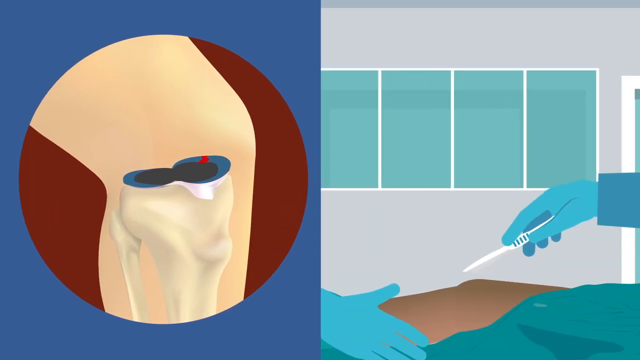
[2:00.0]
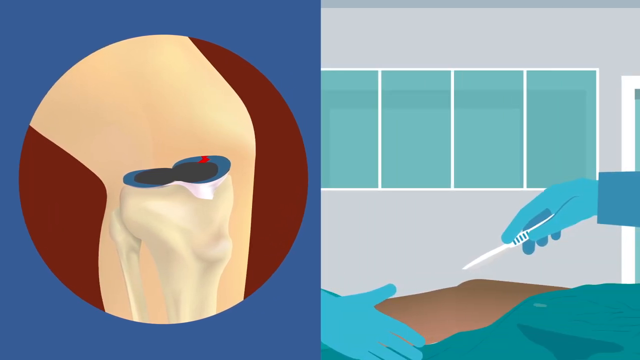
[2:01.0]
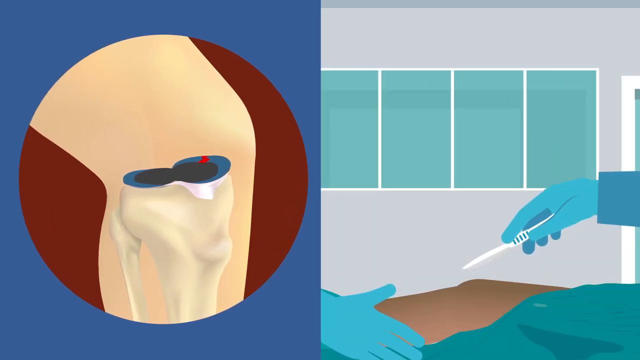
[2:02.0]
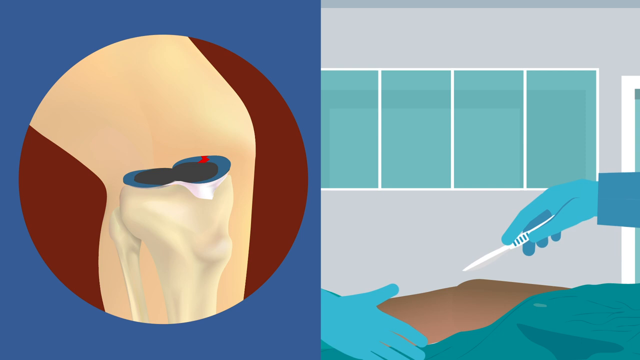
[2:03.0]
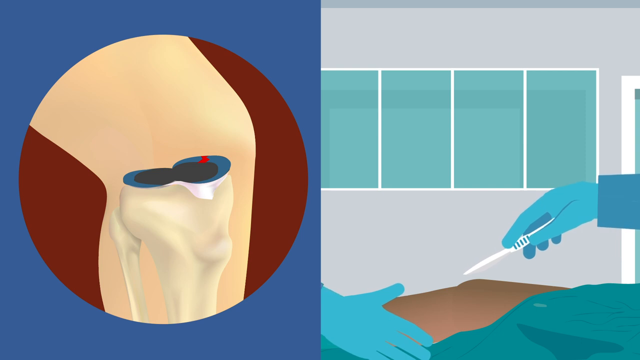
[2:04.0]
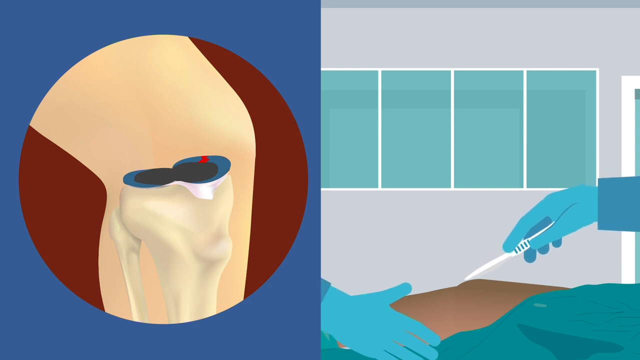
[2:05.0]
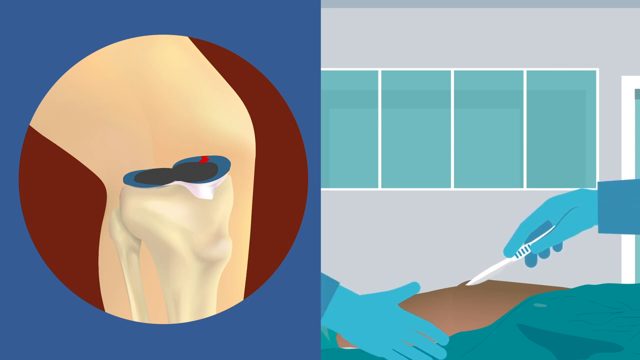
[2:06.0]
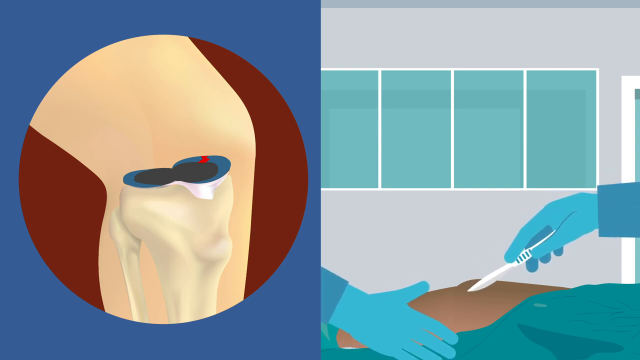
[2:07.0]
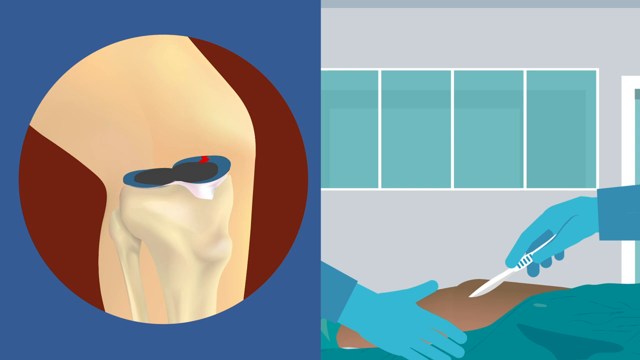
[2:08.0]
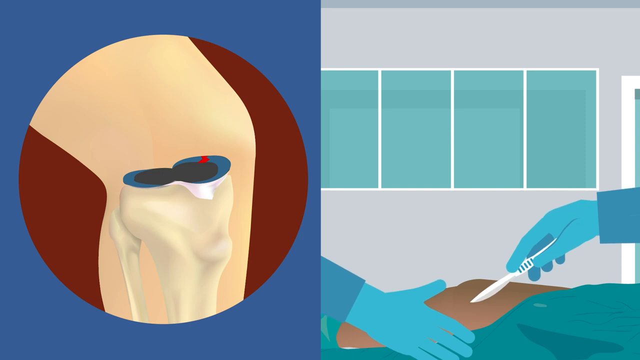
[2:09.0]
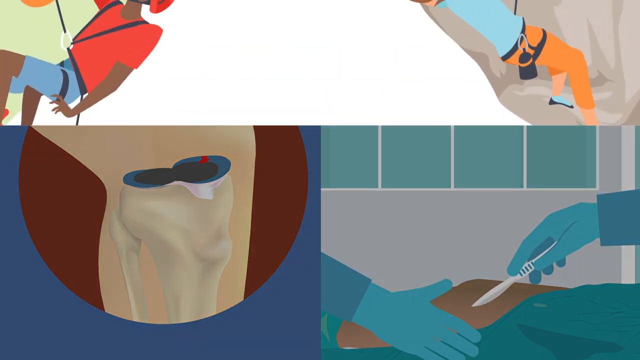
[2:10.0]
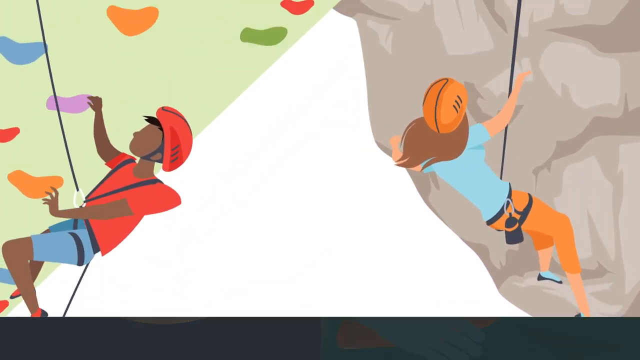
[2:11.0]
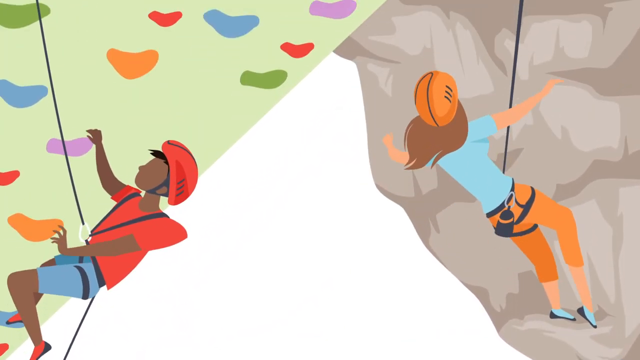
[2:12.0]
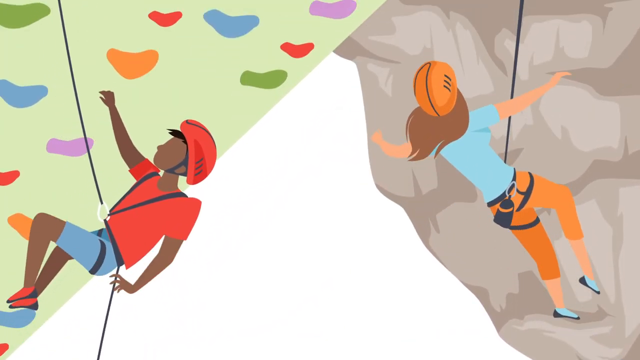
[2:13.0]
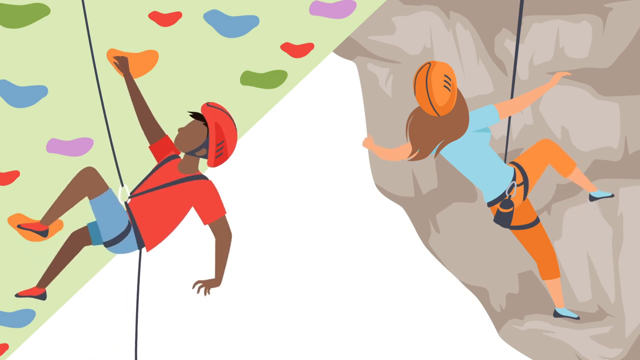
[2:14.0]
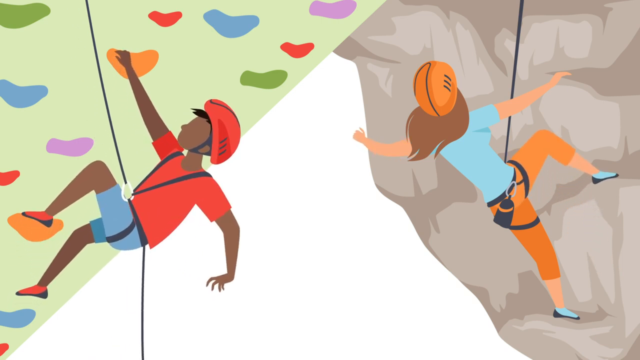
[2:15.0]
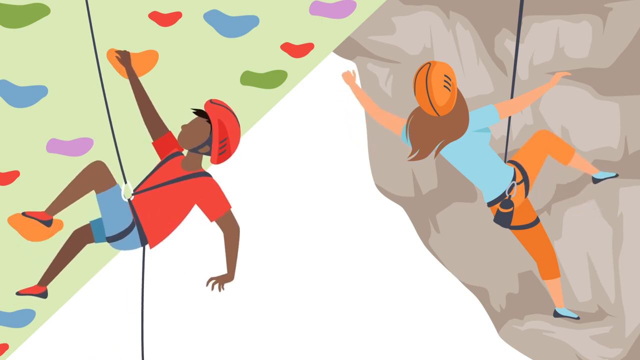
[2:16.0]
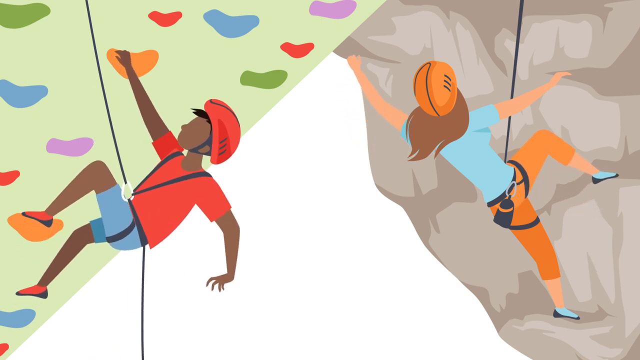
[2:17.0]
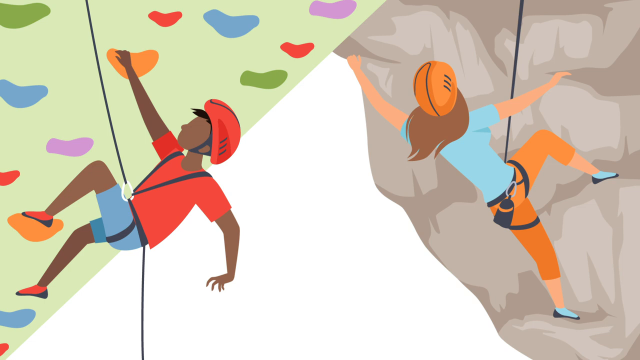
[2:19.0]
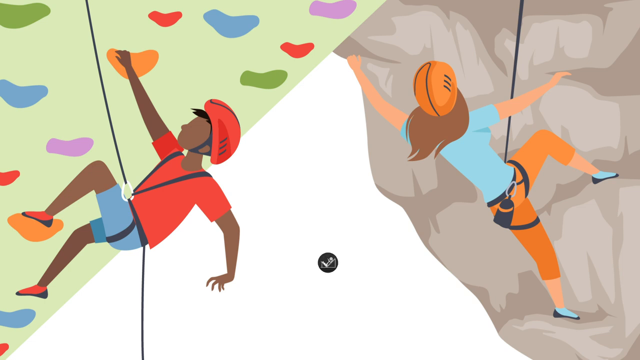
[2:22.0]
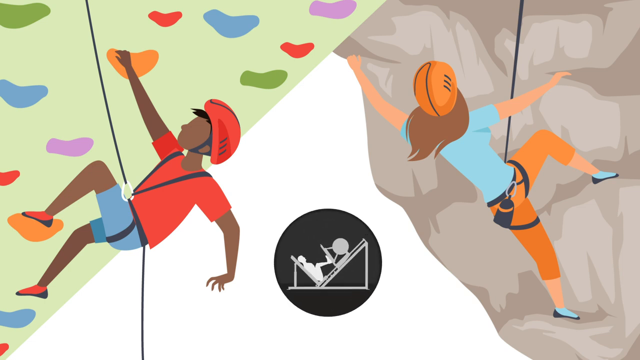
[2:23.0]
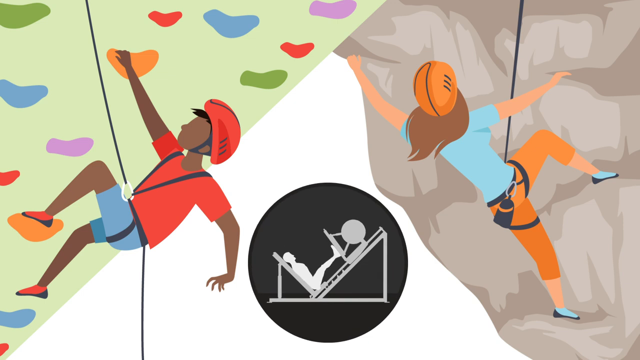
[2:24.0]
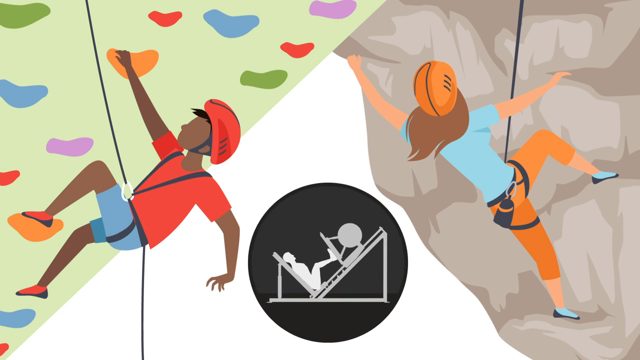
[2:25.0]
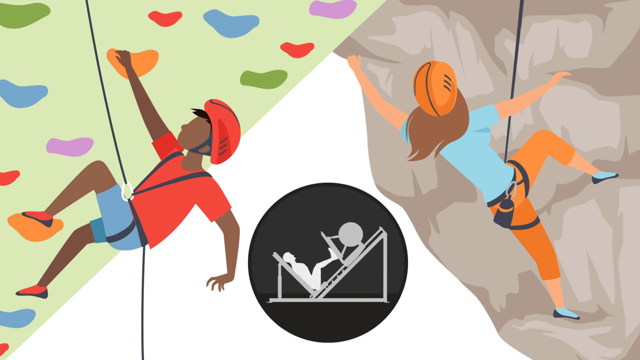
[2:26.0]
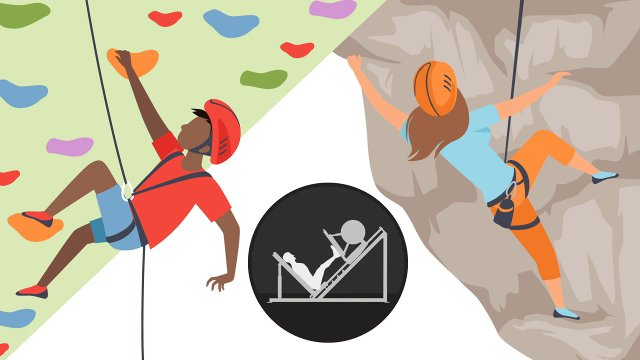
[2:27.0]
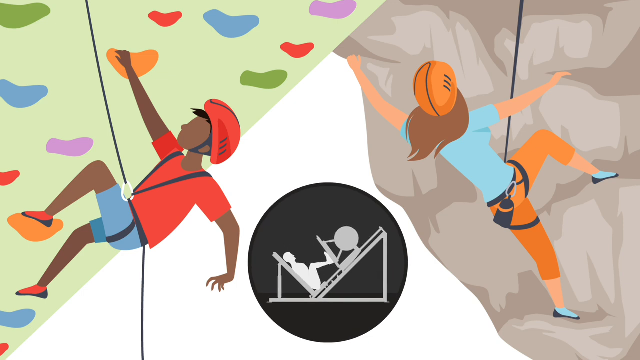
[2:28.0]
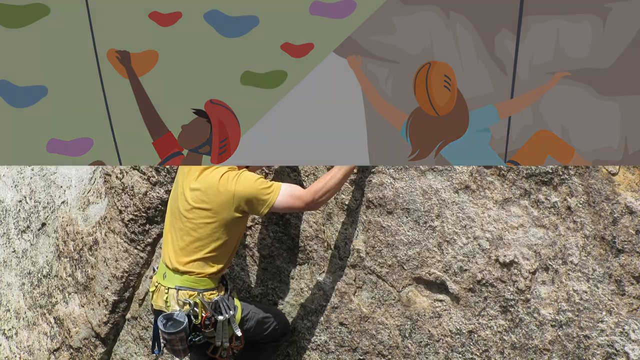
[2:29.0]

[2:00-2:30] The screen is split. On the left, against a blue background, a red circle contains an illustration of a person's knee; the knee bone looks cut off at the top and is black on top with blue around it. On the right, there is a gray wall with some blue windows. A doctor's right hand in a blue long sleeve comes in from the right side of the screen holding a scalpel, and another person's right hand in a blue glove comes in from the left side. What looks like an African person's knee is lying on a table. The hand slowly moves up and down while the hand on the left slowly moves left and right. Just as it looks like the scalpel is going to touch the skin, the image switches to two people climbing. On the left, an African-American person in a red helmet and red shirt climbs a rock wall, facing toward the top left. On the right, a woman in an orange helmet, orange pants and a blue shirt climbs a cliff, facing toward the top right.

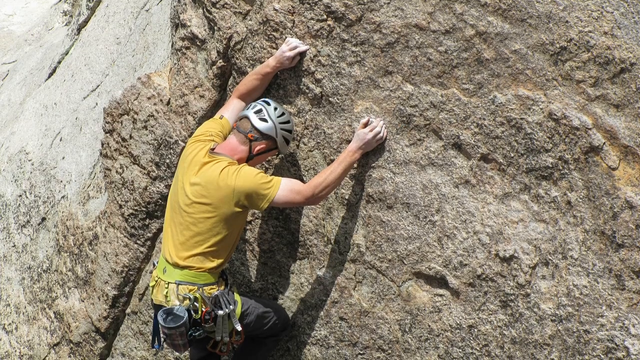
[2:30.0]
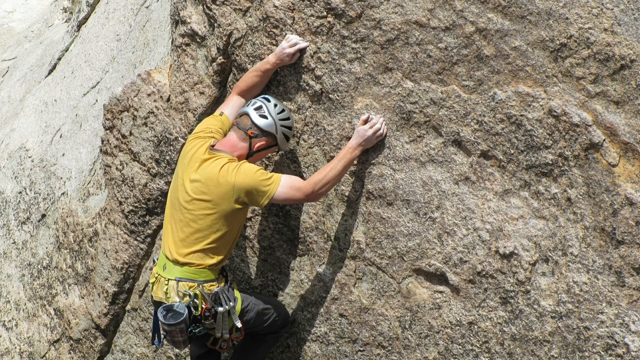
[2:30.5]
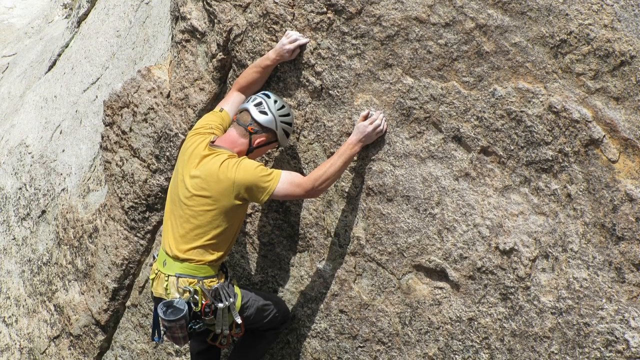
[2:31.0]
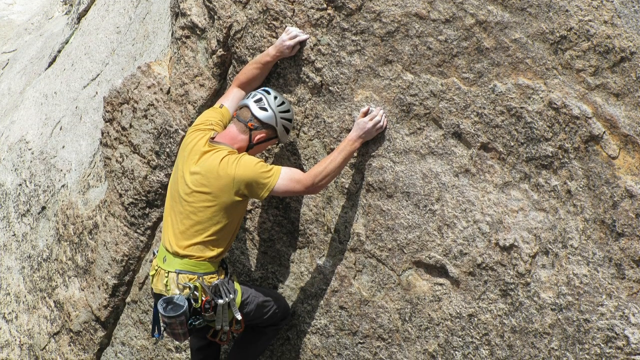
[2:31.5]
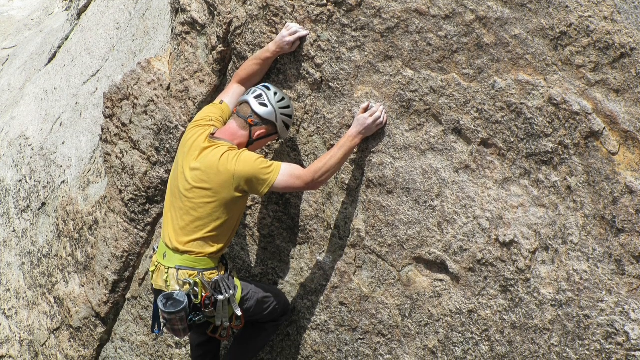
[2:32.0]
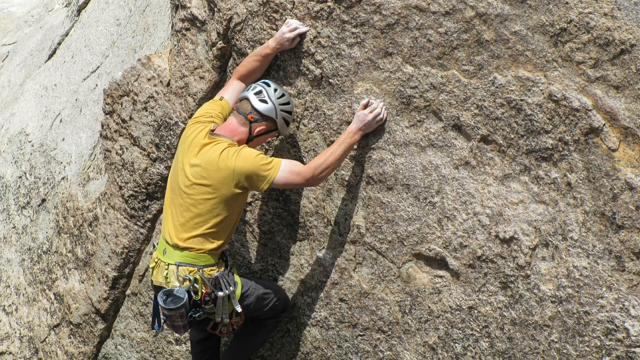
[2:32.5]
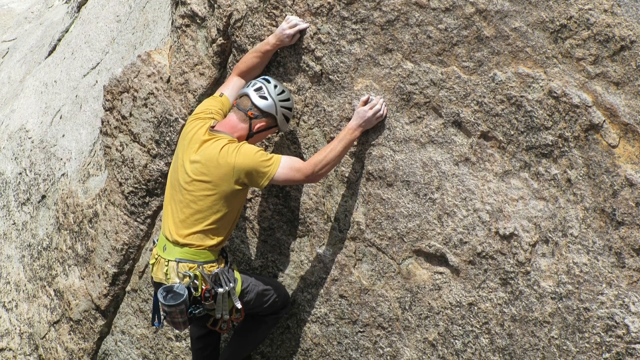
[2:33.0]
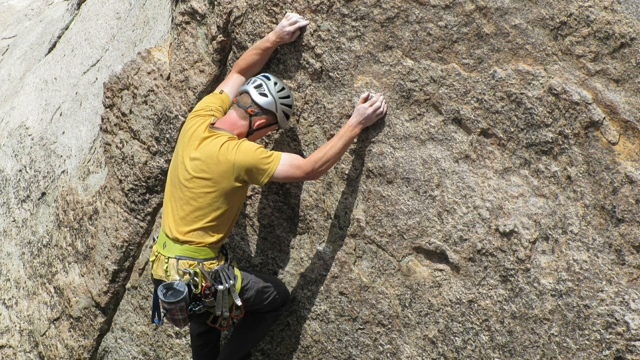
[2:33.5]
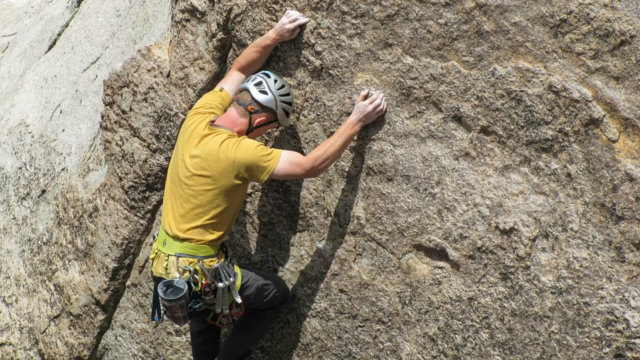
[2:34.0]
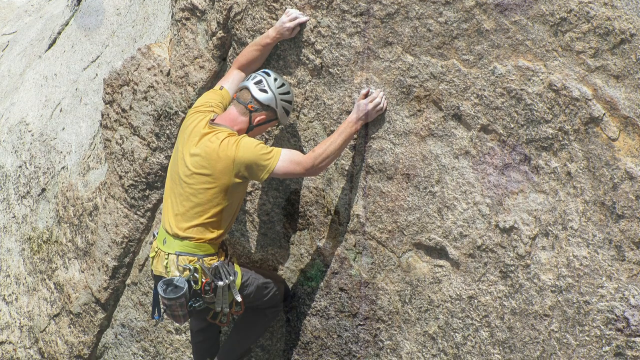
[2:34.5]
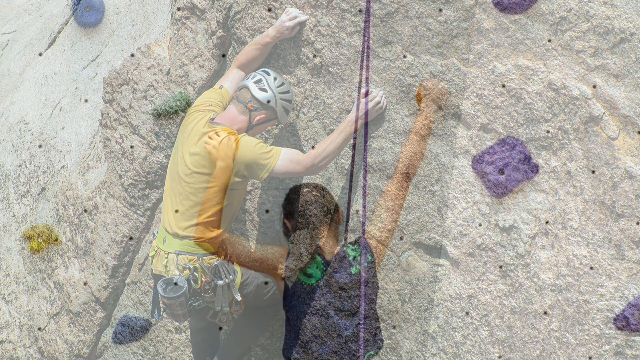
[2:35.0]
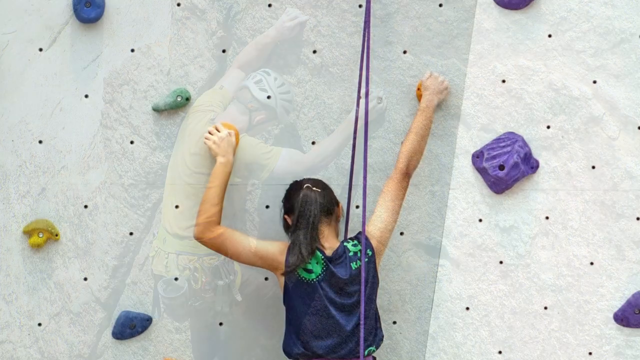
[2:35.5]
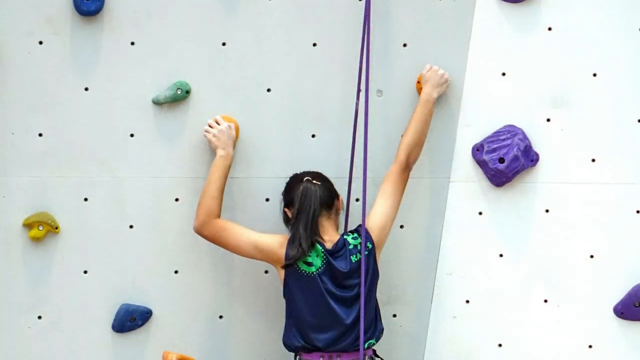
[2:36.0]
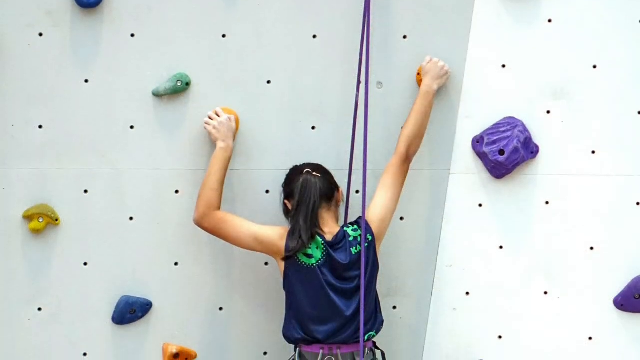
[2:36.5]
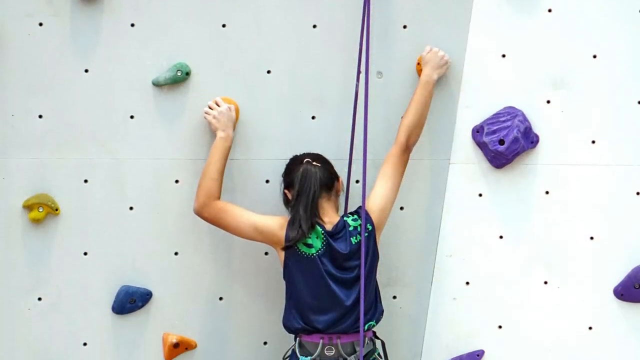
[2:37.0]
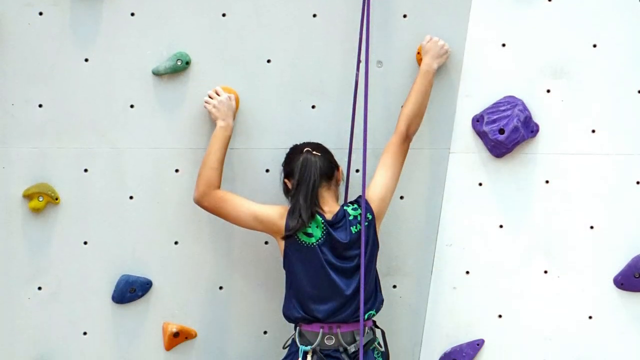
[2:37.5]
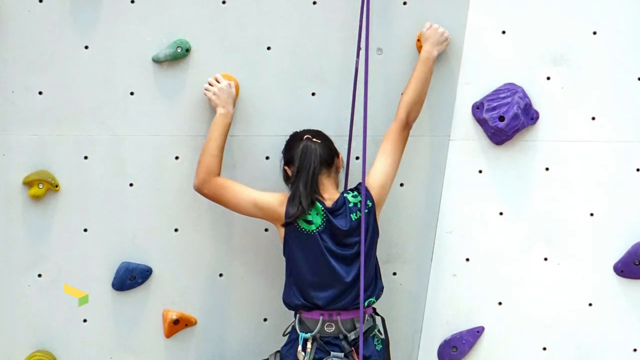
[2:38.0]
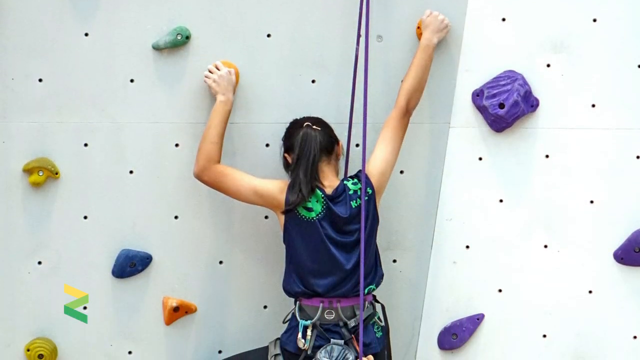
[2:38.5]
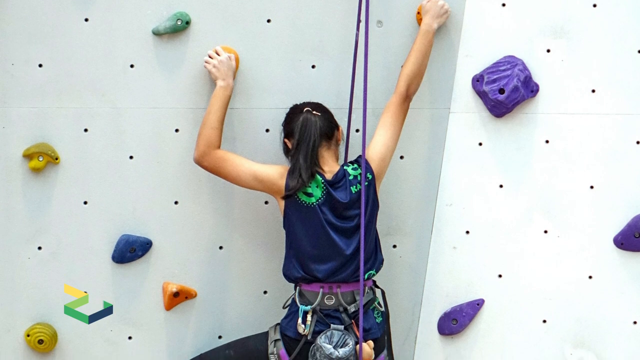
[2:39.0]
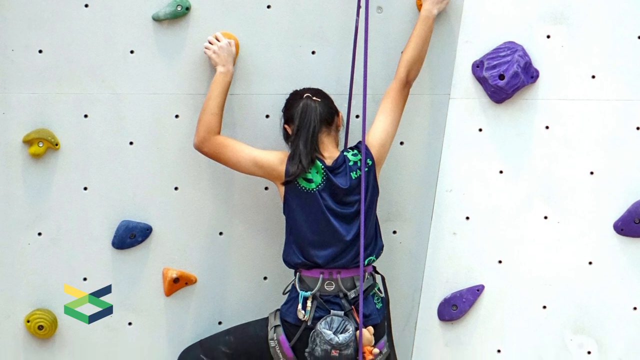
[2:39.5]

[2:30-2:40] A man climbs up a cliff face with both arms extended above his head. He is looking down, and his back is visible. He wears a gray helmet, a yellow shirt, gray pants, and a harness around his waist with various tools connected to it. The camera pans down. Then a woman is shown climbing a climbing wall like one at a sports center. Her back is visible, and she wears a dark purple shirt. Her left arm extends toward the left side of the screen and bends up at the elbow, while her right arm is extended completely out, holding on to an orange hold. The camera pans down, showing that the woman has a harness on.